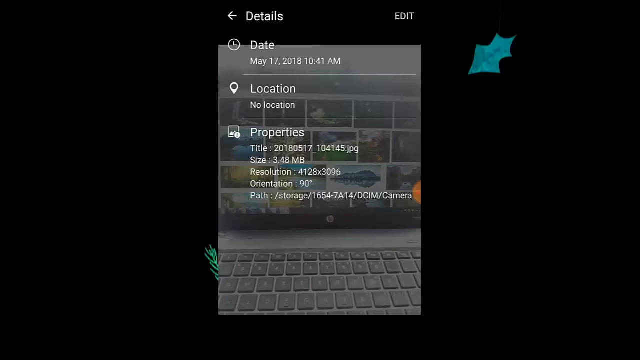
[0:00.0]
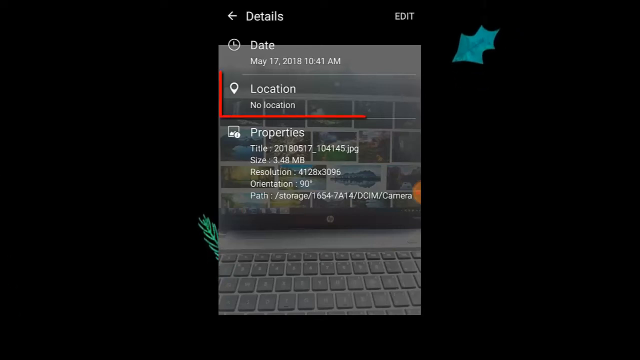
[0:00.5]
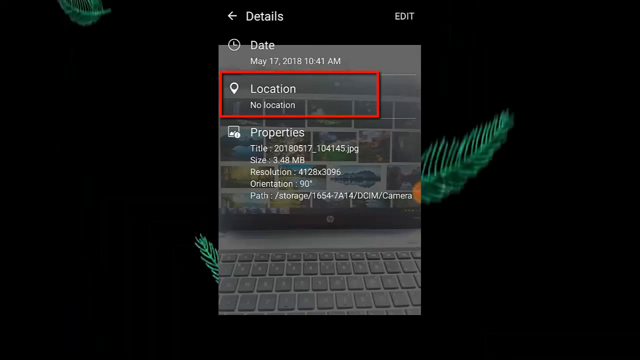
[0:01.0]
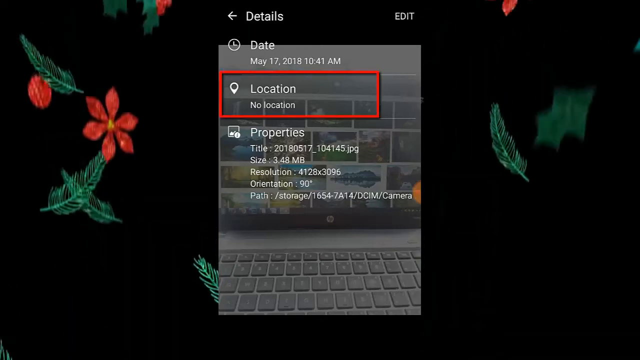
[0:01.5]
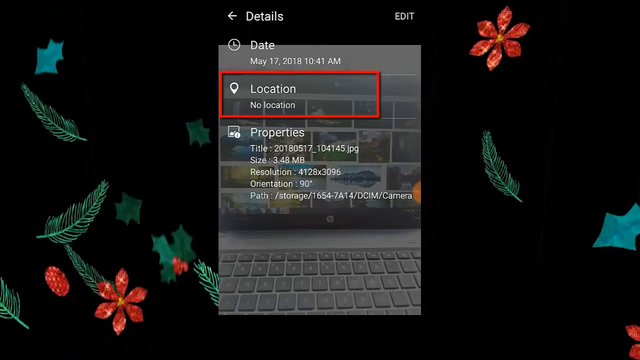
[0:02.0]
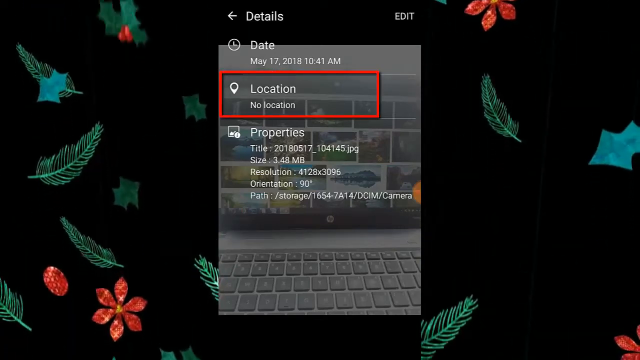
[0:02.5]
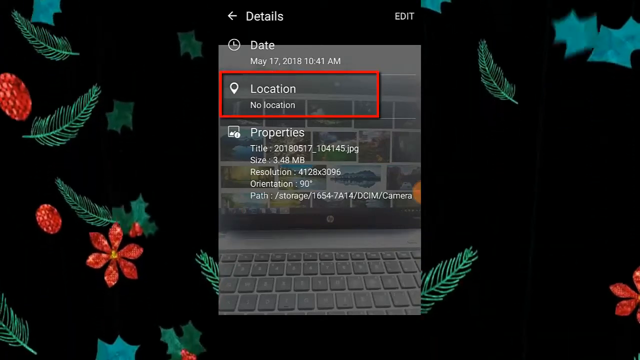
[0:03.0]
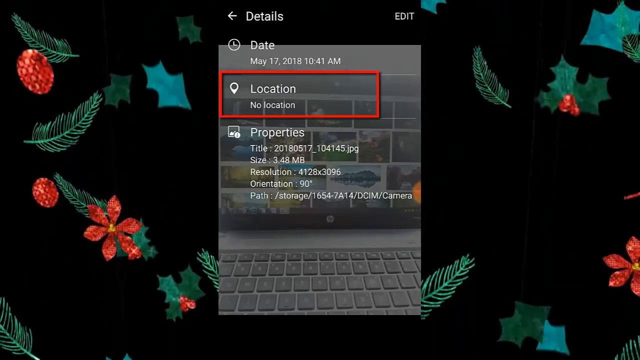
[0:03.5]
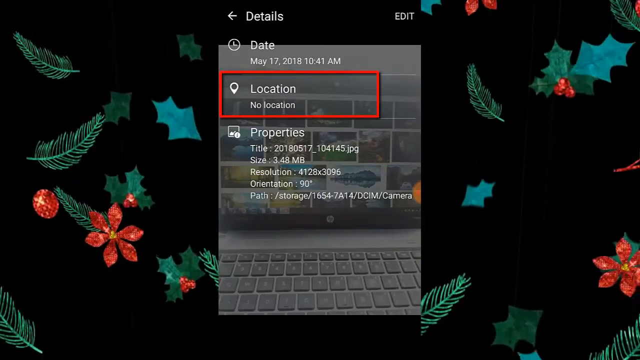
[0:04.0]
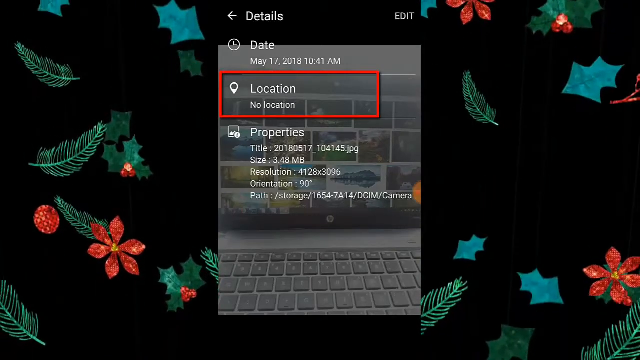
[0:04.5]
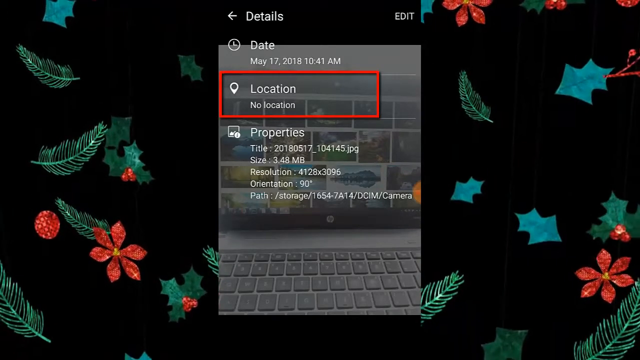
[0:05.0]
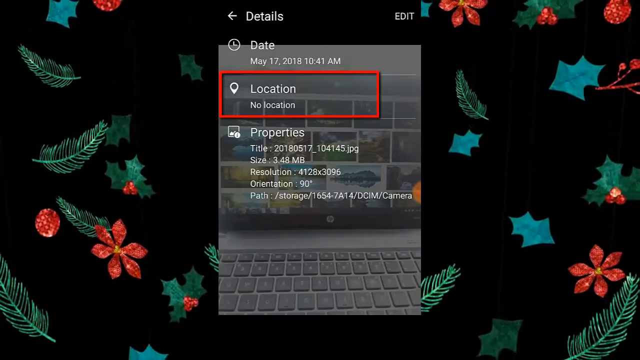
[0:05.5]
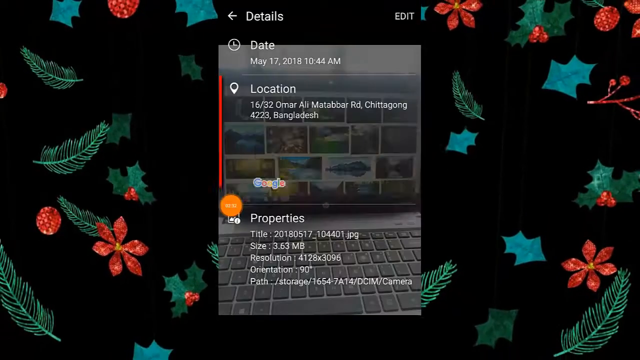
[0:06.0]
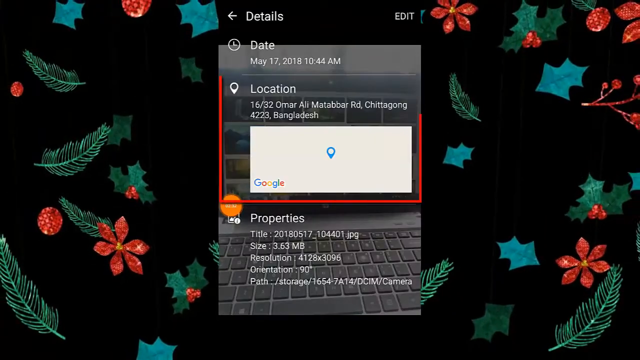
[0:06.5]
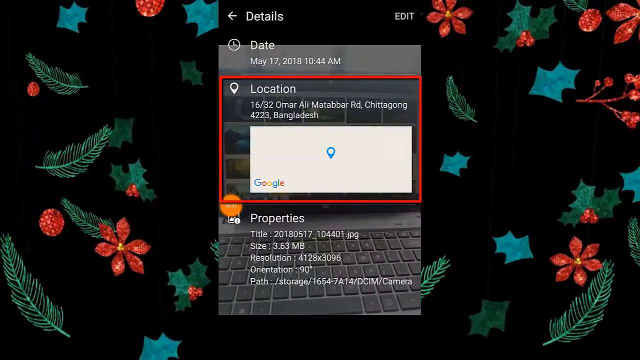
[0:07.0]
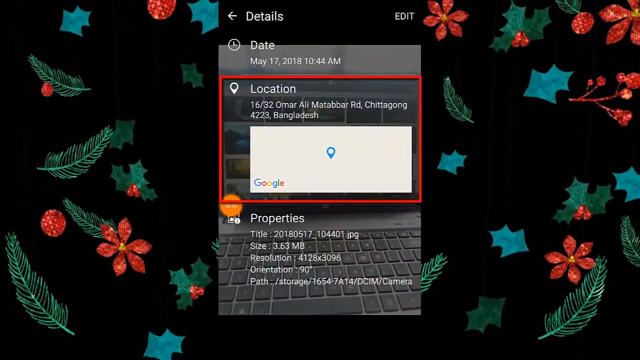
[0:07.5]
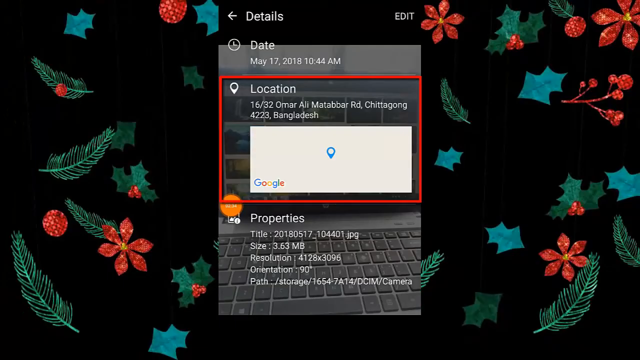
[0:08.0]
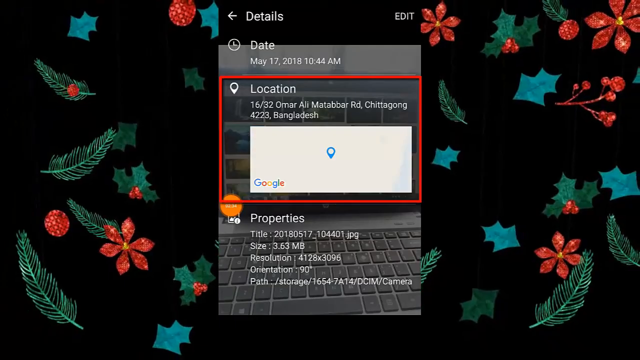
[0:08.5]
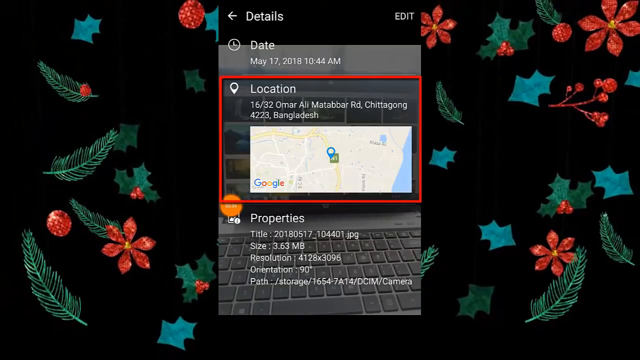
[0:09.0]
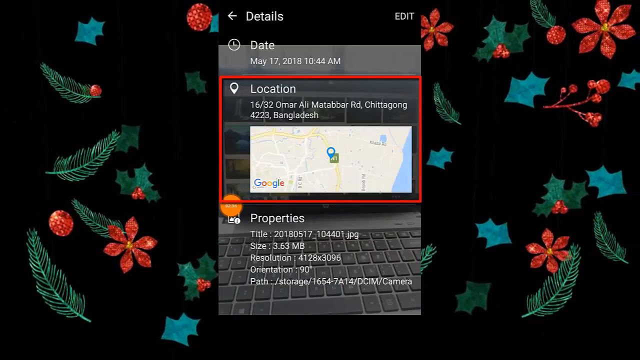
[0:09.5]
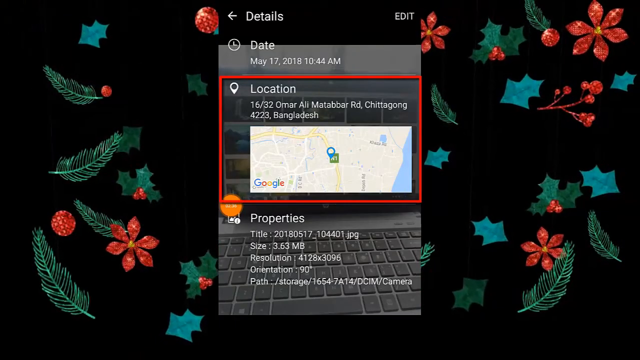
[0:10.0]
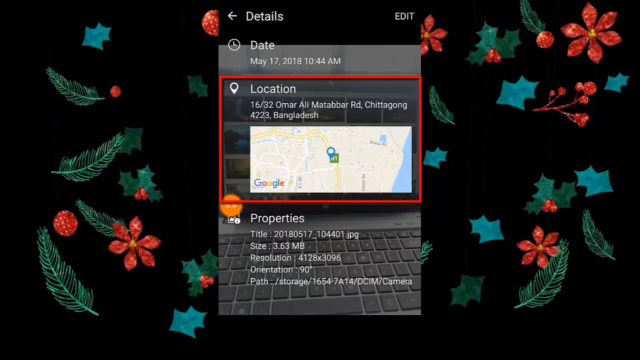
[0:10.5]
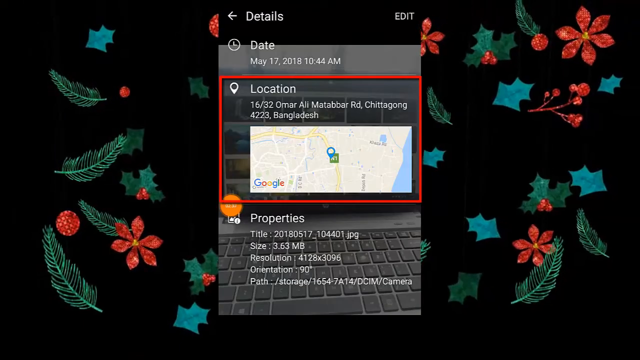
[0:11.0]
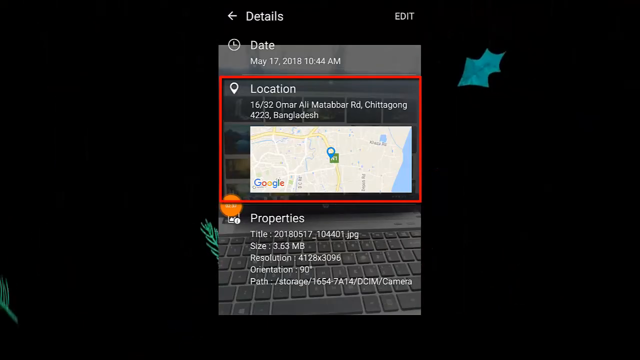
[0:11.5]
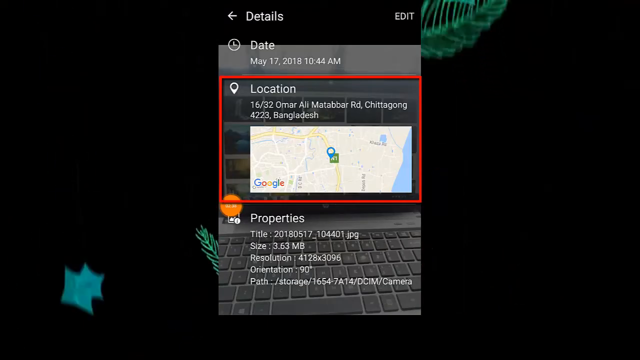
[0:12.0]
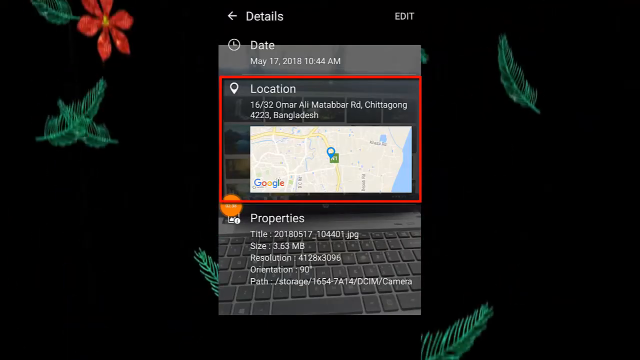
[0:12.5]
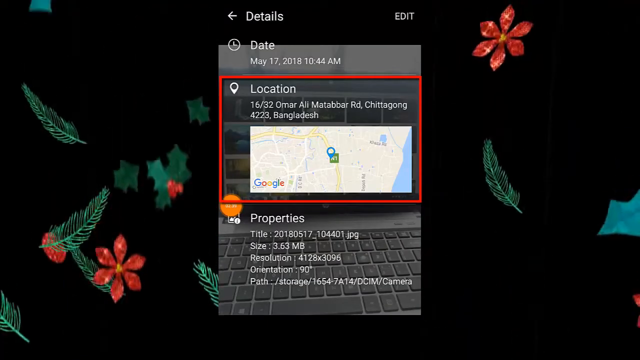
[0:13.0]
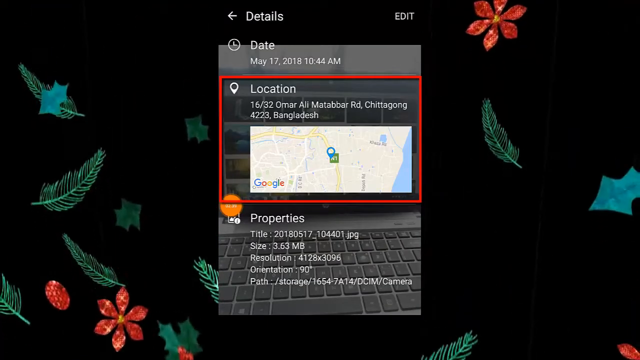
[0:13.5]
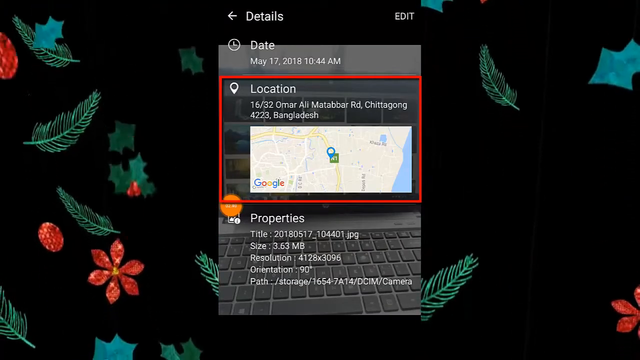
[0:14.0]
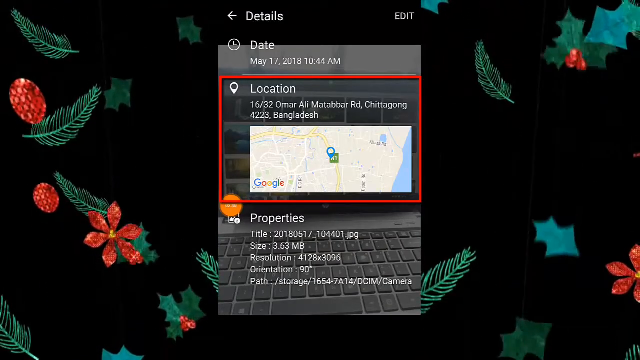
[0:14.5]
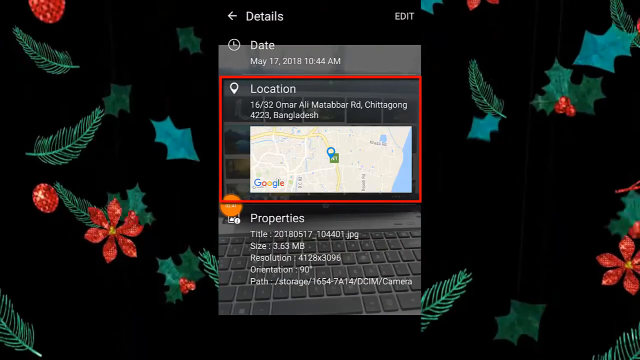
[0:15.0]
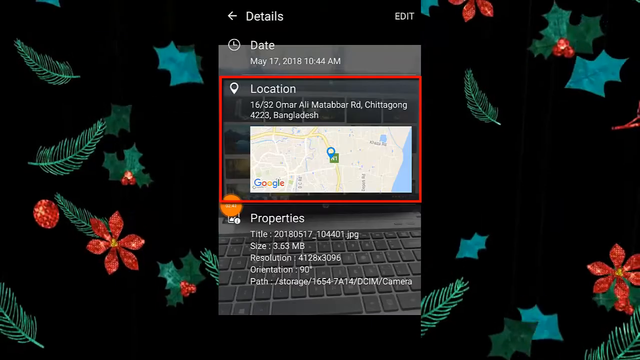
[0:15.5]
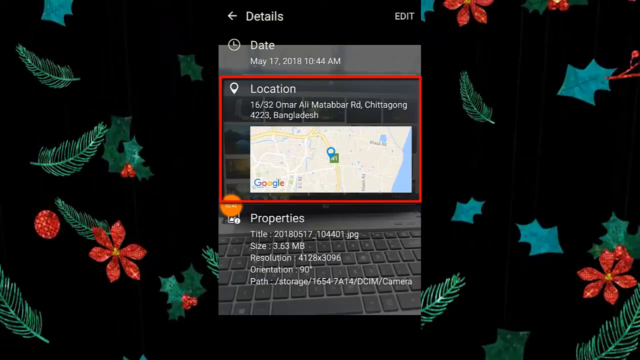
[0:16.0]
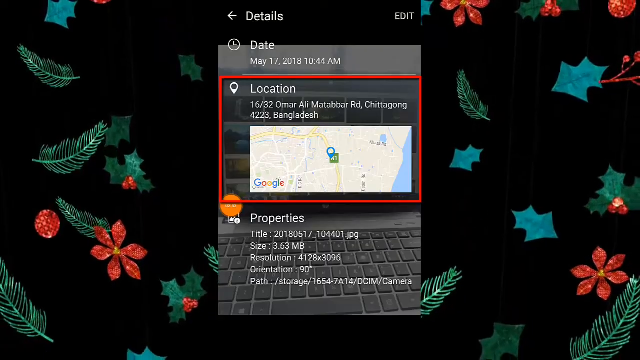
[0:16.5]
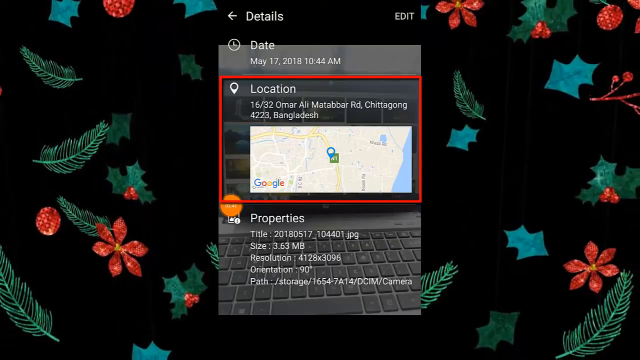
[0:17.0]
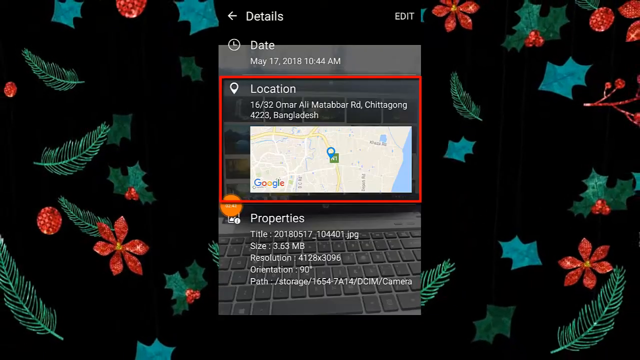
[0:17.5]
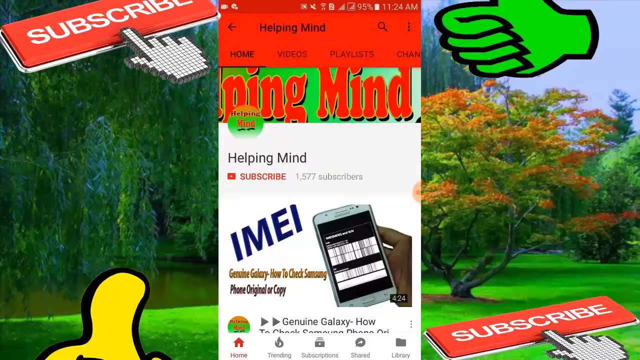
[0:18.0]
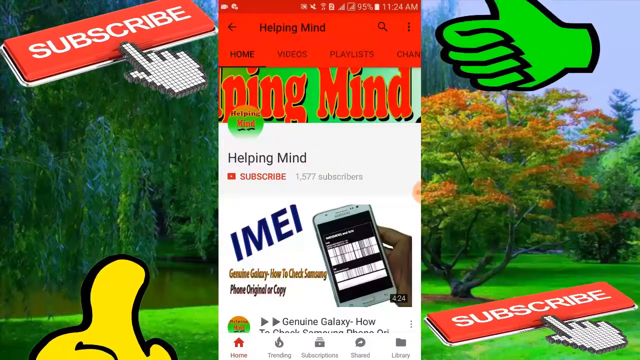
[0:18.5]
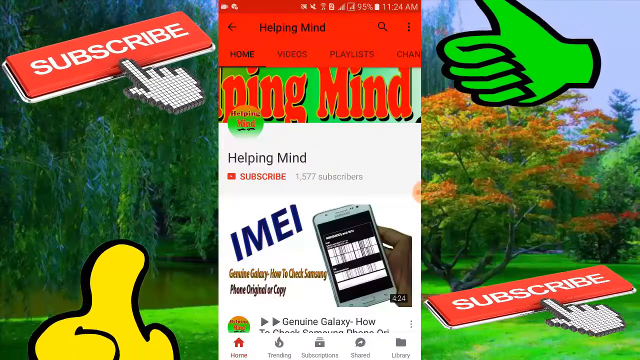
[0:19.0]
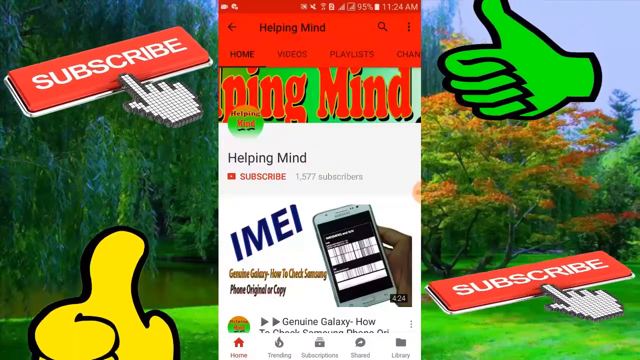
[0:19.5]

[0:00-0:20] A screencast shows a details menu on a smartphone. On the sides of the video is a moving animated background: it starts as leaves and flowers blowing in the wind, then shifts to a realistic forest with a subscribe button and a thumbs up. The date at the top of the menu reads May 17, 2018 at 10:41 AM, and the location is set to "No Location". The properties read "Title, 20180517-104145.jpg, Size 3.48MB, Resolution 4128x3096, Orientation 90°, Path: storage/1654-7A14/DCIM/Camera". A red square encircles the location option. The user clicks on Location, and a Google Maps option appears underneath it, showing a map with a blue pin for their current location. The video then changes to a window titled "Helping Mind", which shows an option to subscribe, 1,577 subscribers, and the abbreviation "IMEI". It reads "Galaxy, how to check summary, phone, original, or copy".